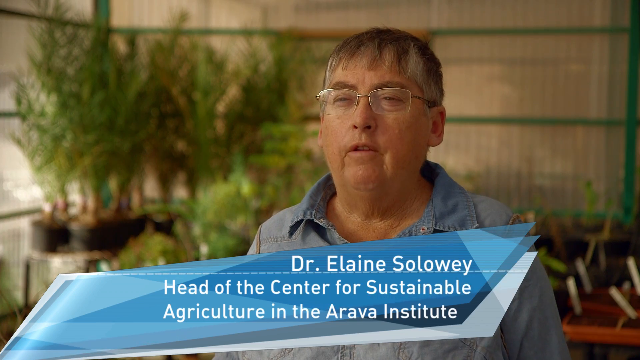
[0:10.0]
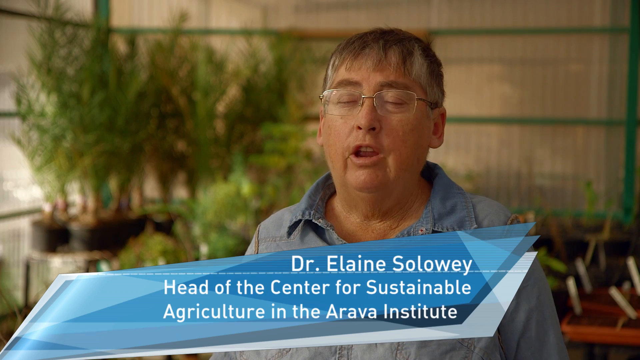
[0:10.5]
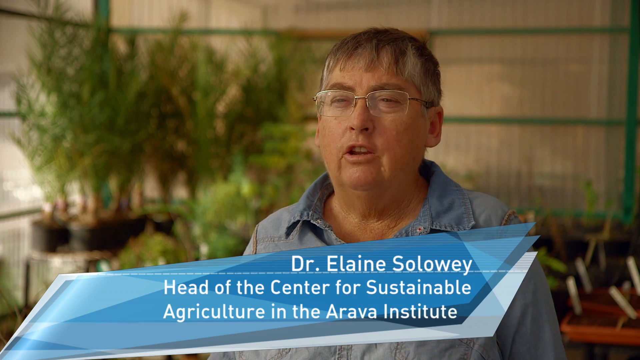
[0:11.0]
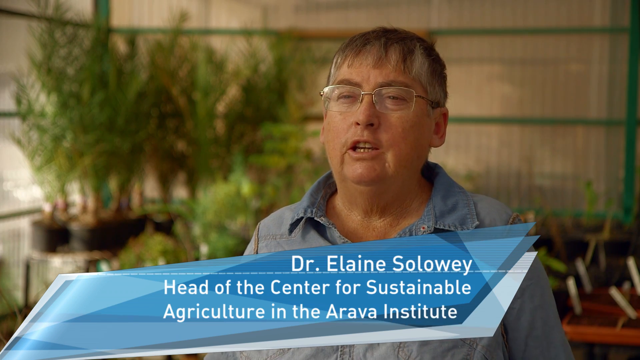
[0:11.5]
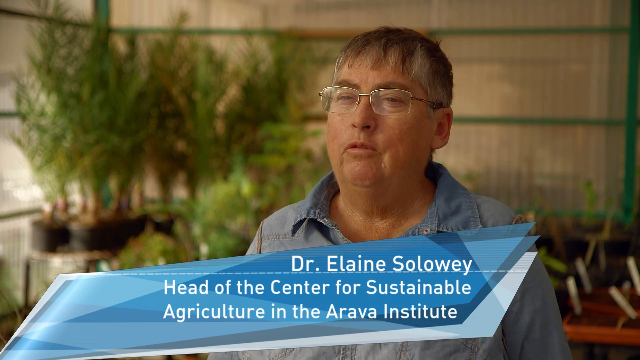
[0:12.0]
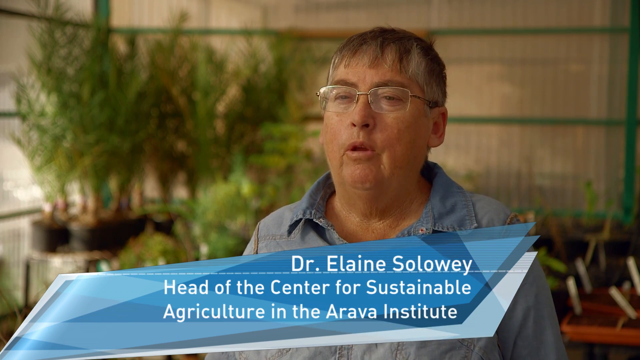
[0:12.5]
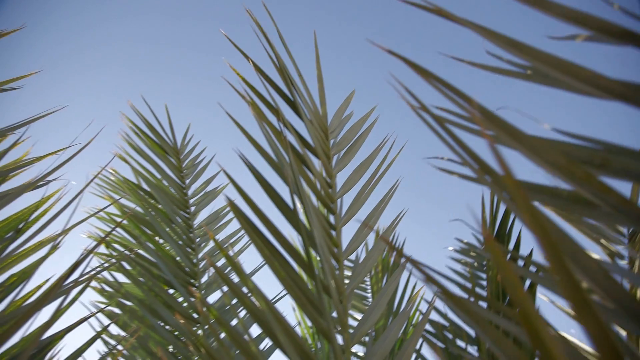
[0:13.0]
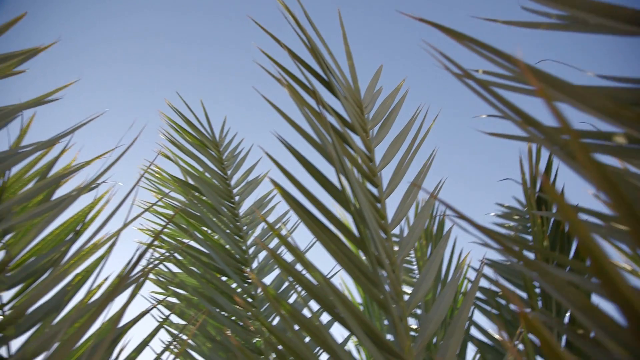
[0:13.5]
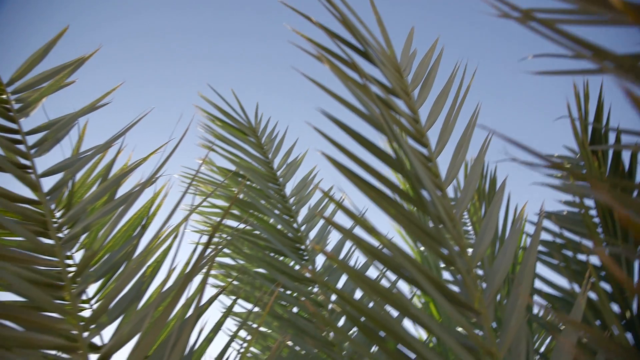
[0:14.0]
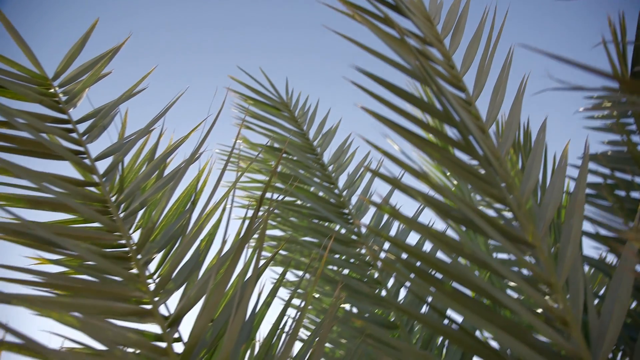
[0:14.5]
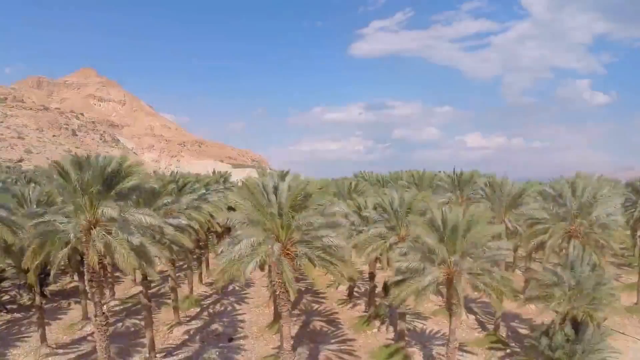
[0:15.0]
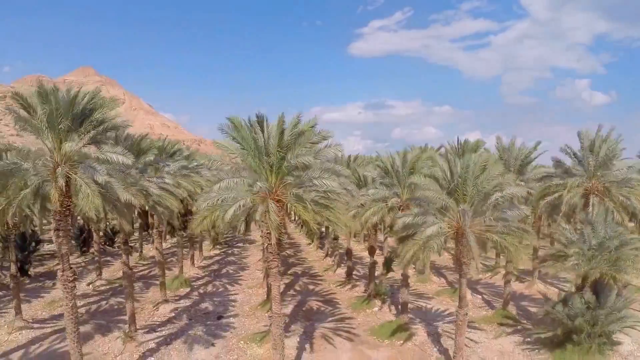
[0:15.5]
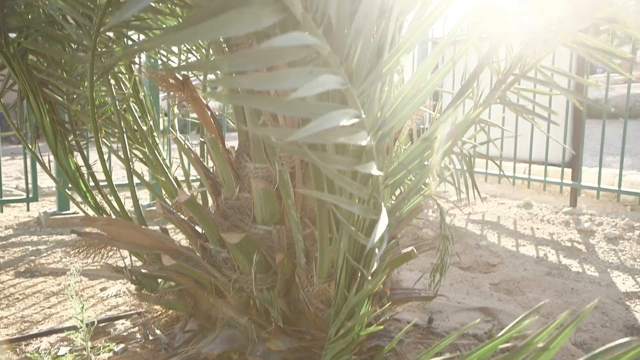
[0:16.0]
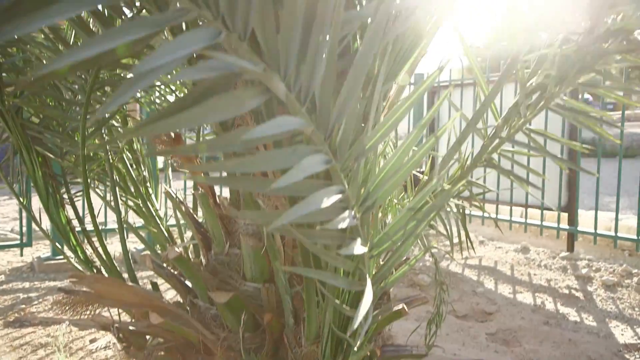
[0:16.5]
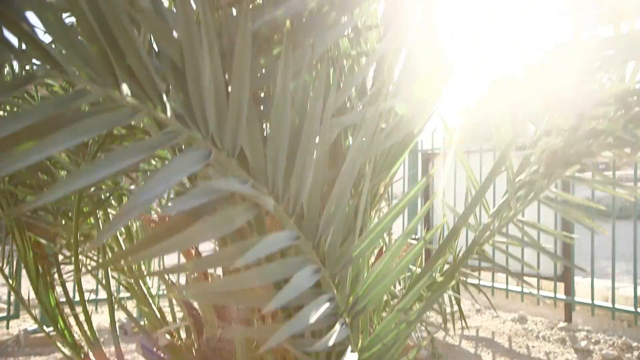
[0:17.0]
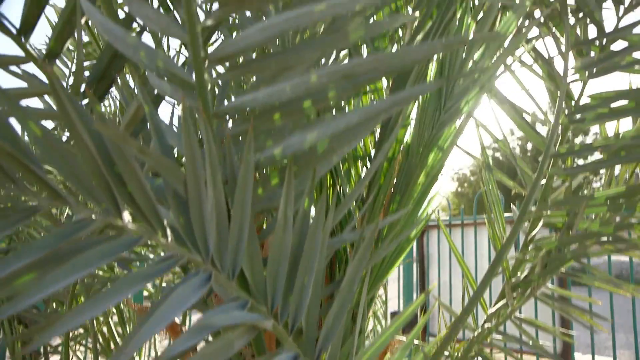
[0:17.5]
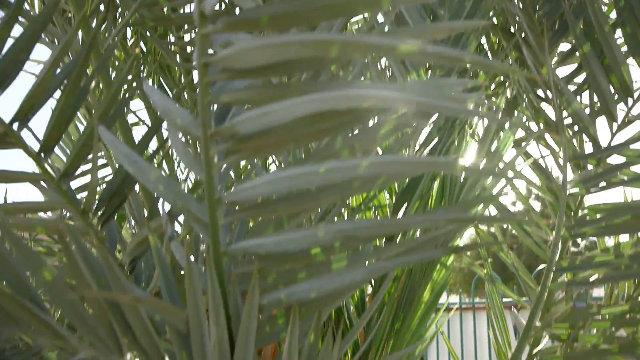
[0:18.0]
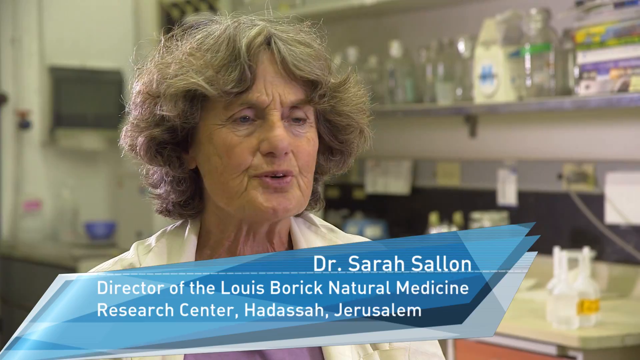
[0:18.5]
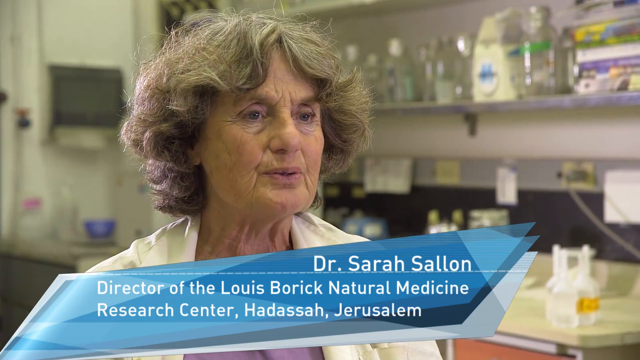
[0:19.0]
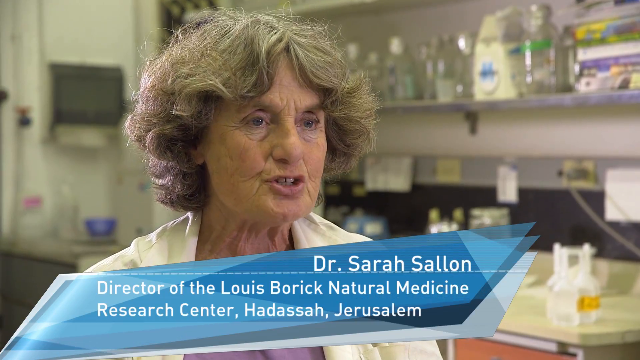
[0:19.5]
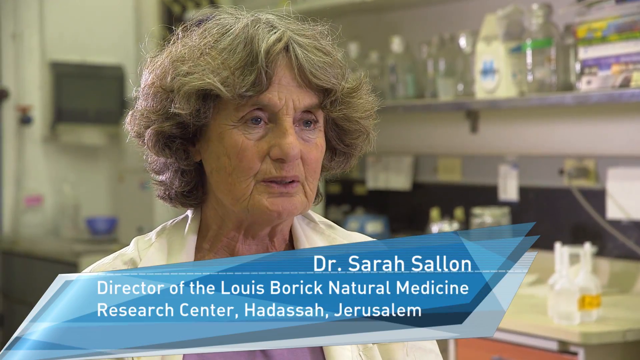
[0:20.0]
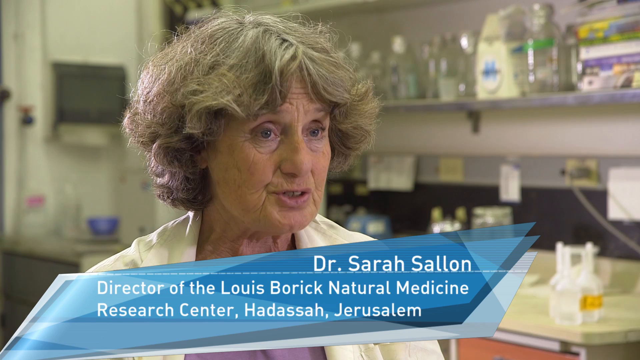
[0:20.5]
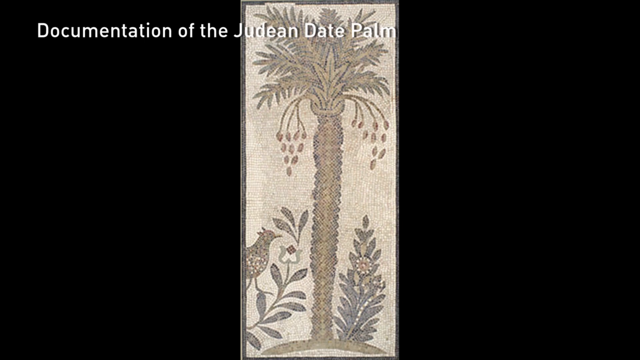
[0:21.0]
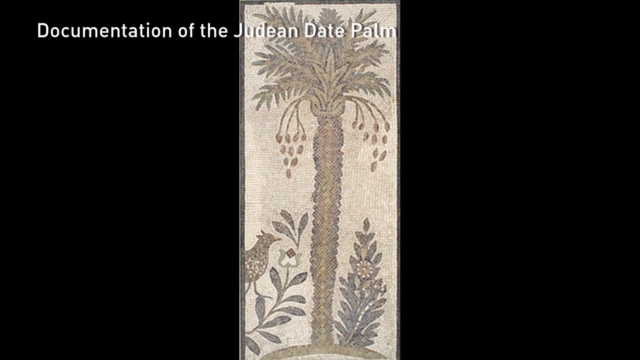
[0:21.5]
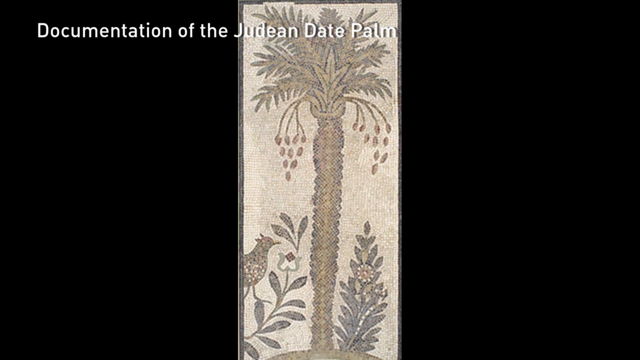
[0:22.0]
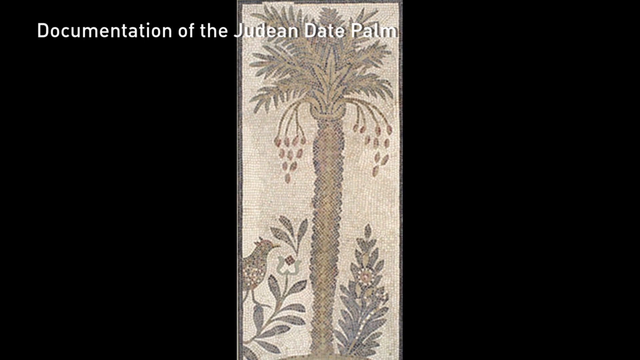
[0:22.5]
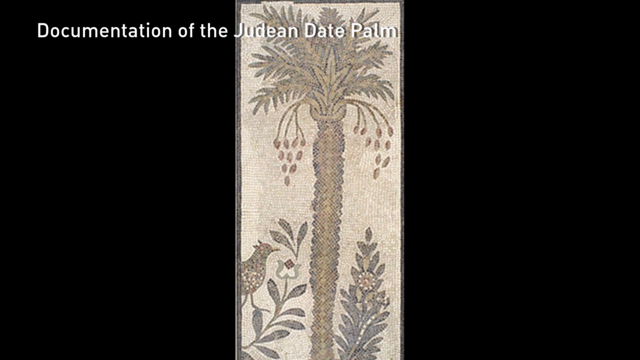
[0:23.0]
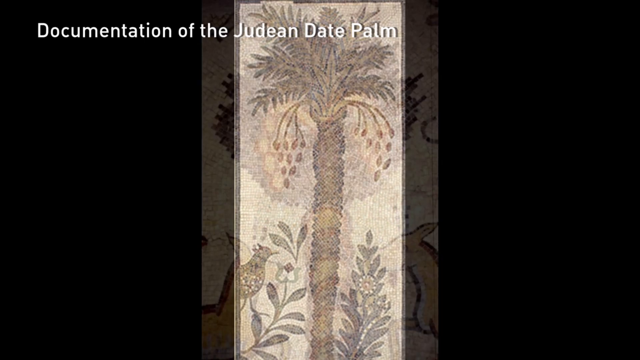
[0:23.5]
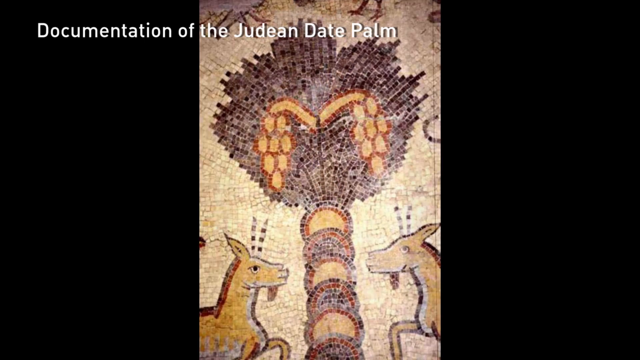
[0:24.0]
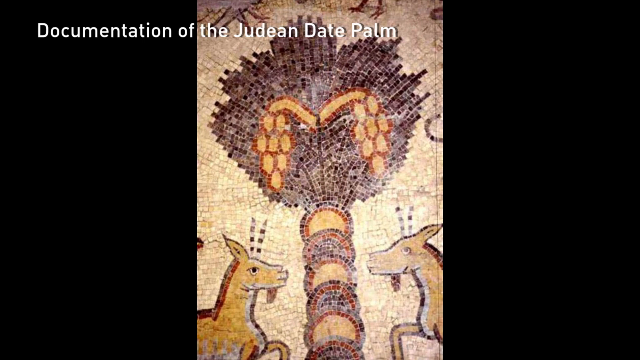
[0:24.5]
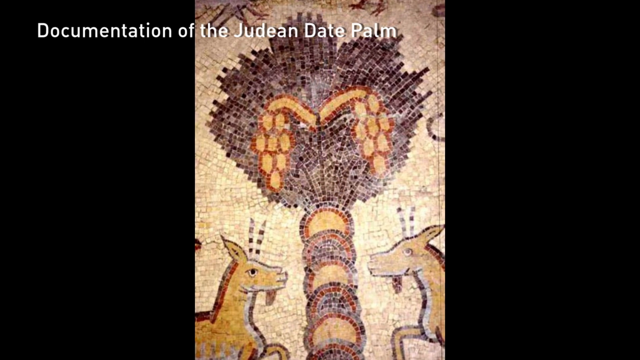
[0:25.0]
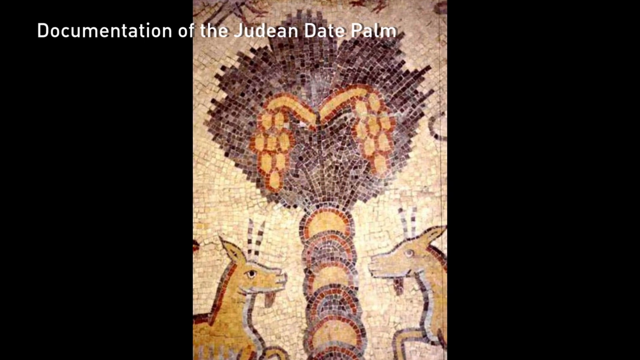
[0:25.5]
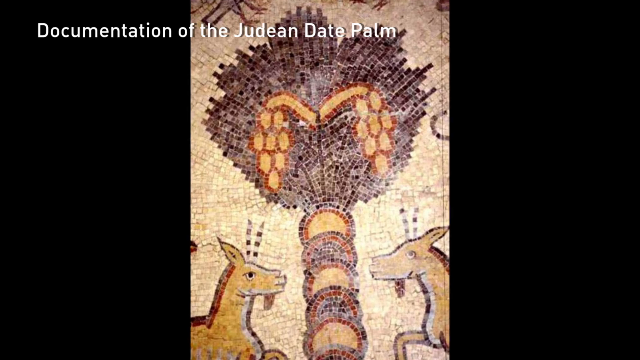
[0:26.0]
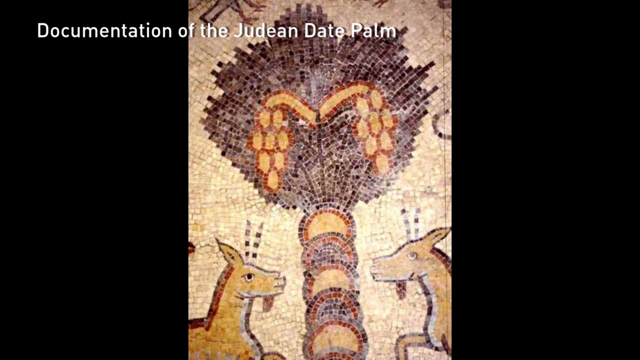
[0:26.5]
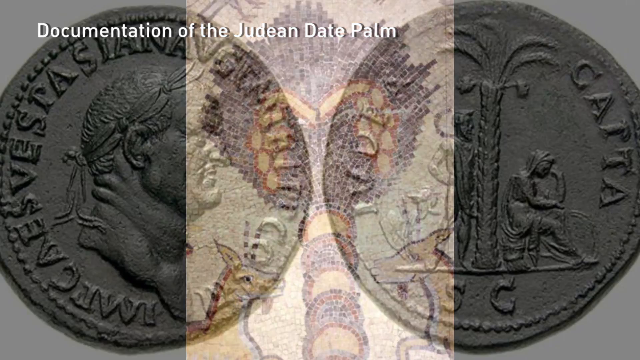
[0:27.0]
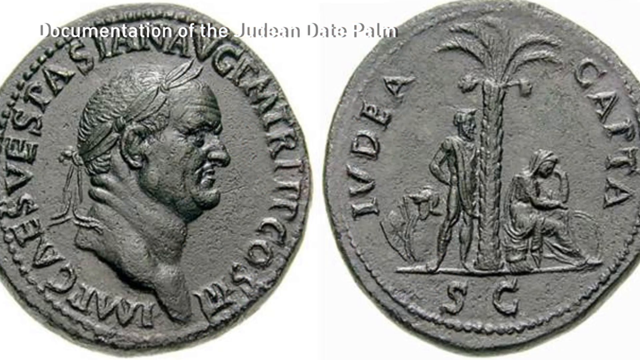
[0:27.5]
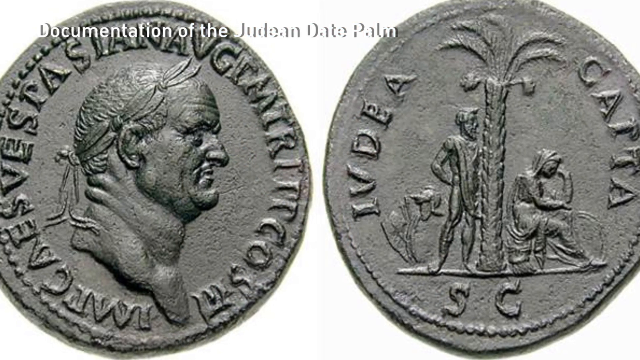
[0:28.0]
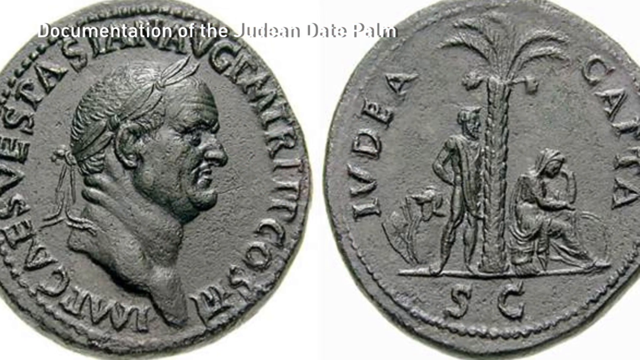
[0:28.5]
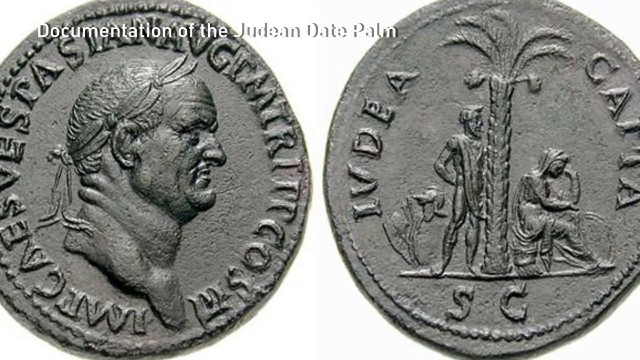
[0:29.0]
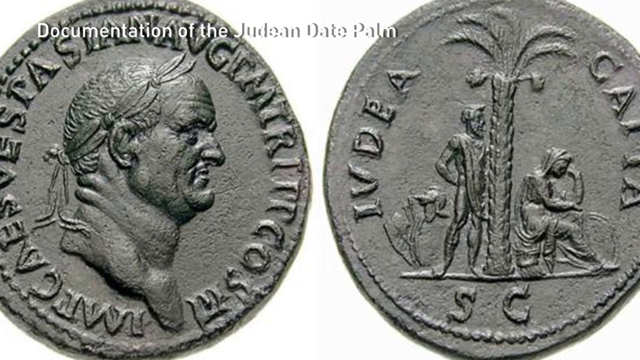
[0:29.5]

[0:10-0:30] A man wearing glasses, with light tan skin, appears to be Dr. Elaine Soloway, and he talks about a tree that has been brought back from the dead. There is also a woman with frazzled hair, a doctor whose name is not caught. The tree is the Judean date palm. There are pictures of coins dating back to the Roman Empire. The video keeps shifting between the two talking about this extinct or mostly extinct tree, a field showing the tree growing, and pictures of a Roman piece of currency bearing the tree.